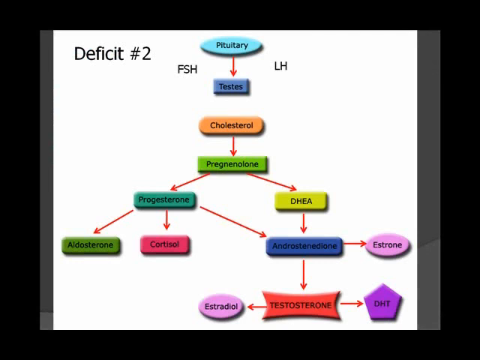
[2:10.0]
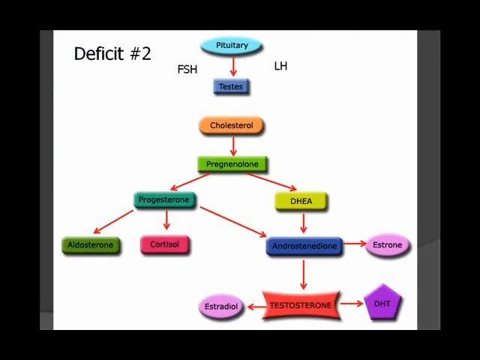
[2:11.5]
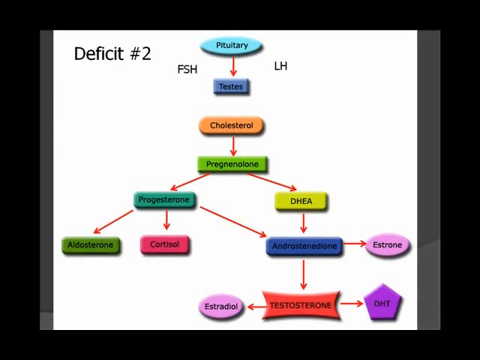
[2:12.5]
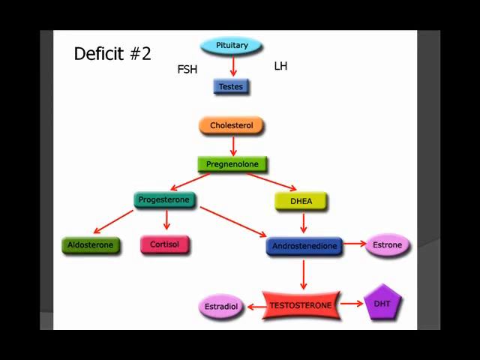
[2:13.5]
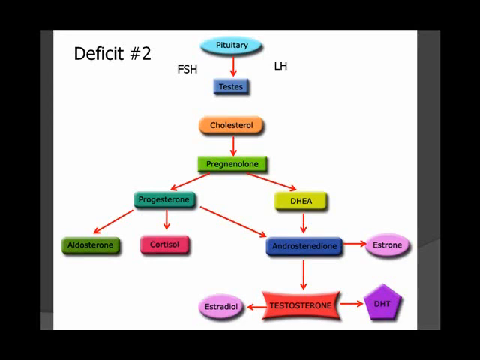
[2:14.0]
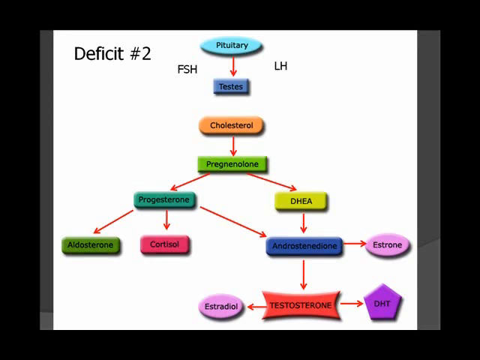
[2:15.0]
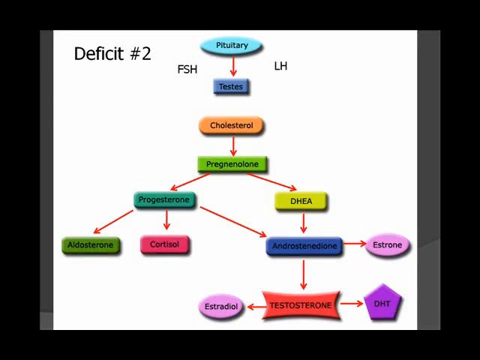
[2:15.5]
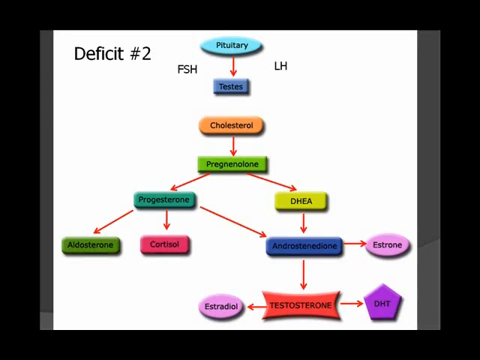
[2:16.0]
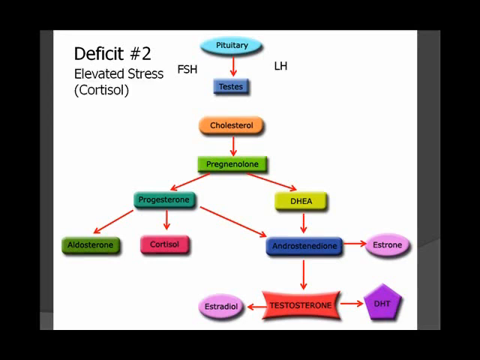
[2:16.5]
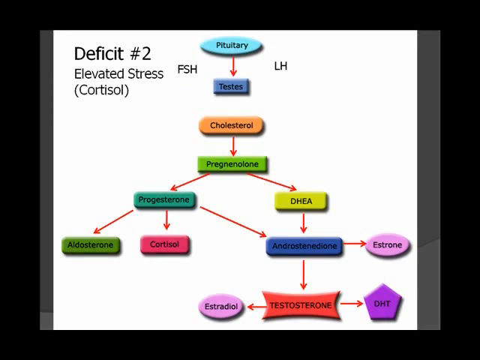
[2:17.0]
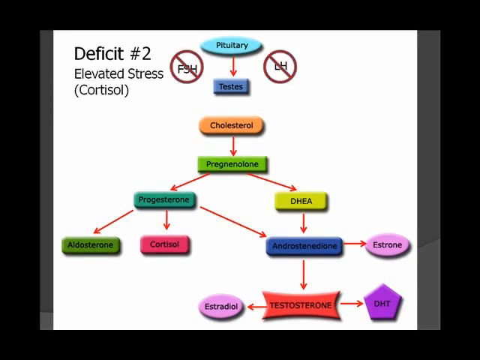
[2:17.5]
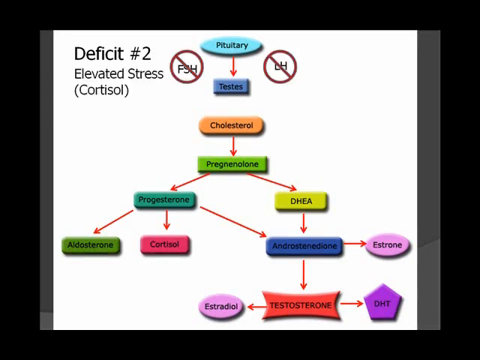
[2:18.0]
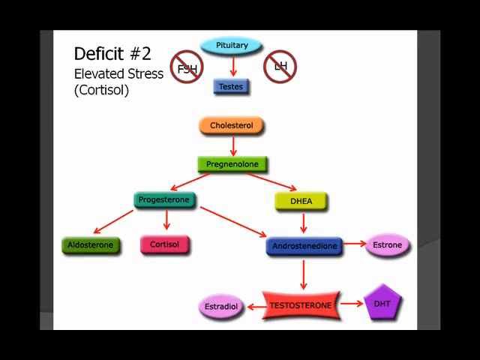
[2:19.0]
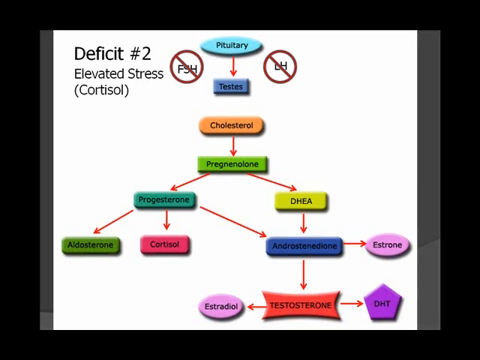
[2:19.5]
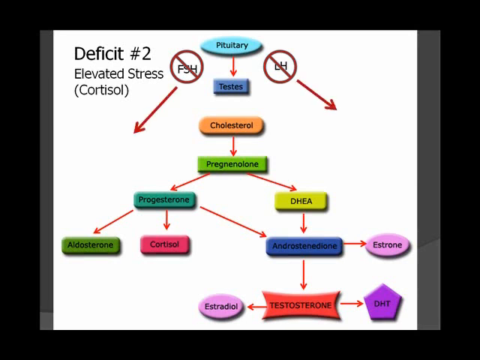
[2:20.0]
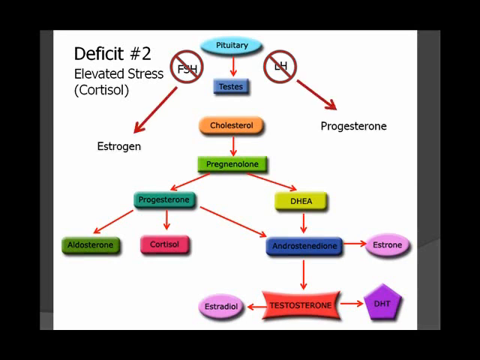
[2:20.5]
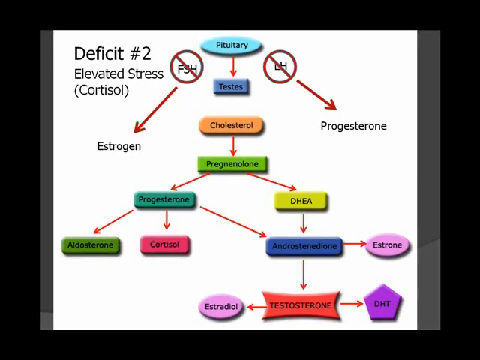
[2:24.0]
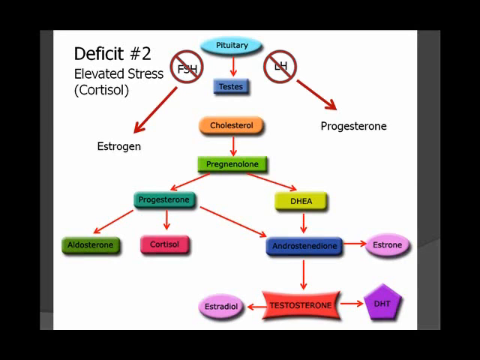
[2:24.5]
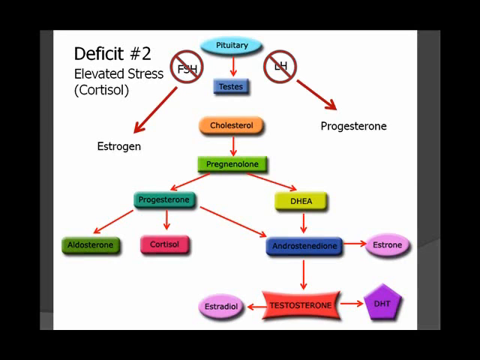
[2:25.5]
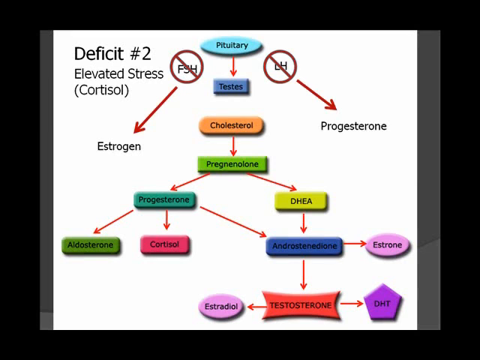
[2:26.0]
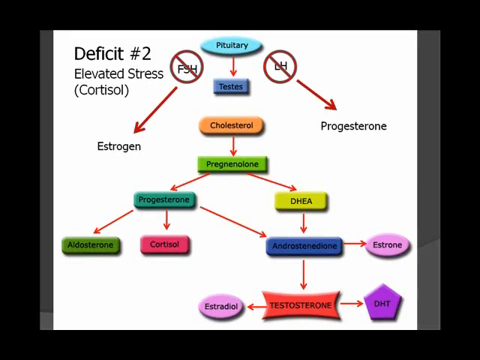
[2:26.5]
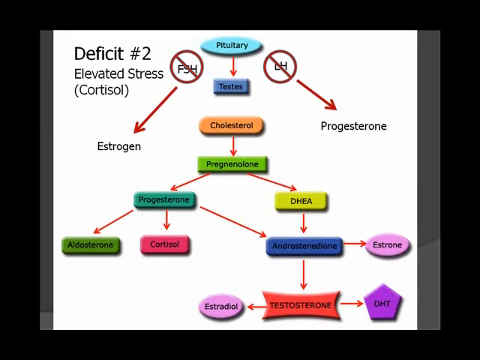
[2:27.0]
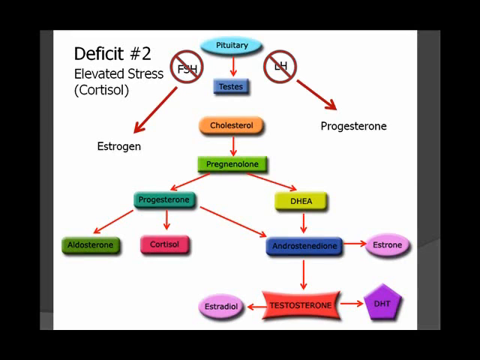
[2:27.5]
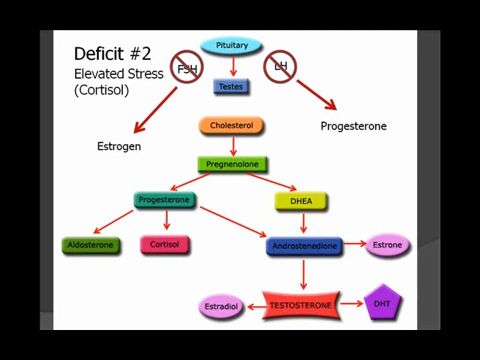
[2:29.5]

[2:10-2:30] Inside the black outer frame is a new slide that is not perfectly centered, skewed toward the left side of the available space. The slide has a white background with symbols arranged as a flowchart. At the top, in a blue oval, is the word "pituitary", with an arrow pointing down to a purplish-blue rectangular box with the word "testis". Below that, in an orange pill shape, is the word "cholesterol", with an arrow pointing down to a light green rectangular box with the word "pregnalone". Under "pregnalone", arrows point left and right: the left one to a light green rectangle with the word "progesterone", and the right one to a smaller light yellow rectangular box with the letters "DHEA".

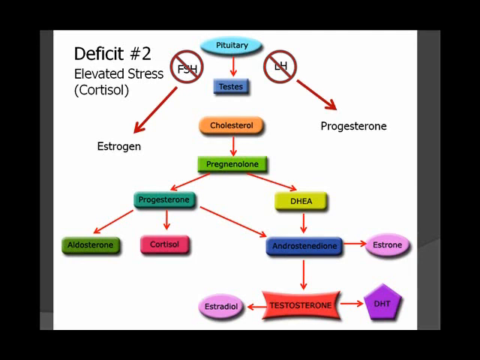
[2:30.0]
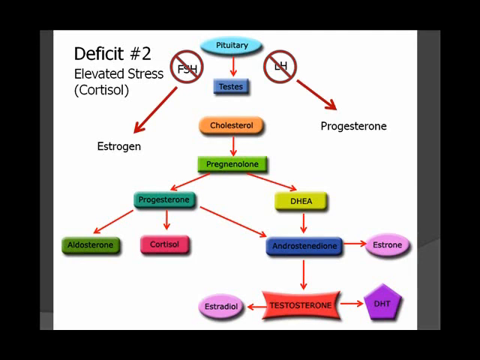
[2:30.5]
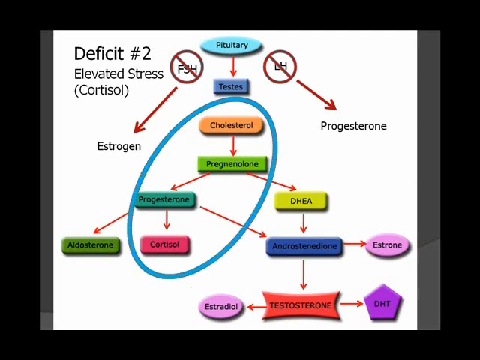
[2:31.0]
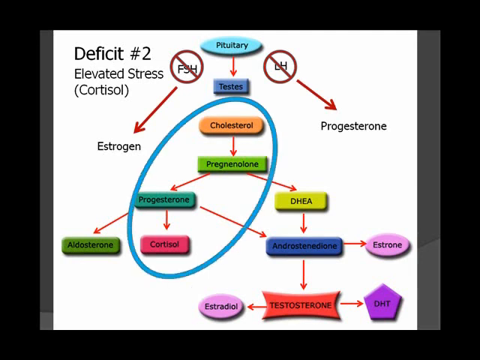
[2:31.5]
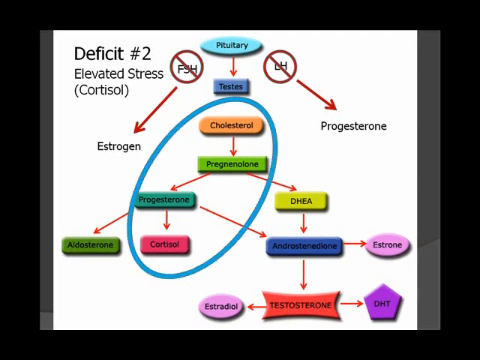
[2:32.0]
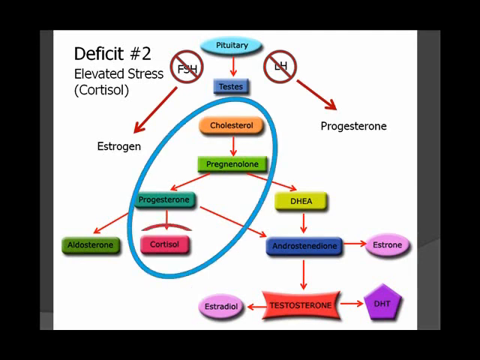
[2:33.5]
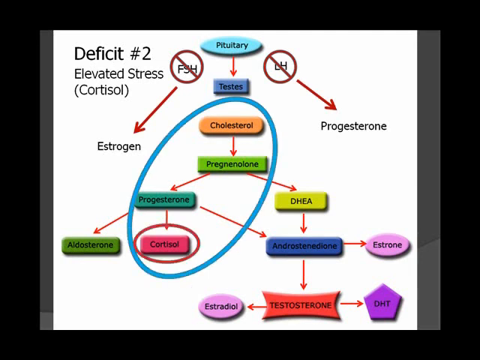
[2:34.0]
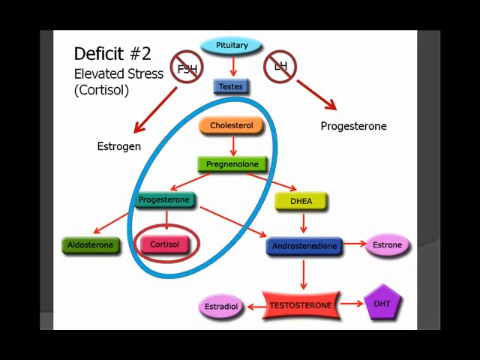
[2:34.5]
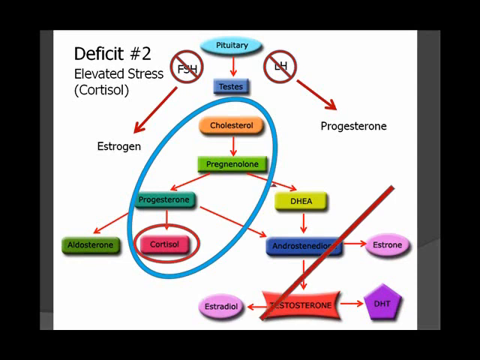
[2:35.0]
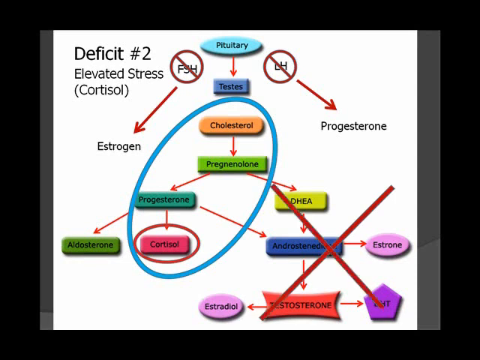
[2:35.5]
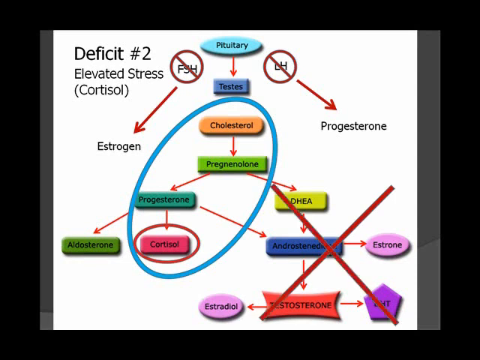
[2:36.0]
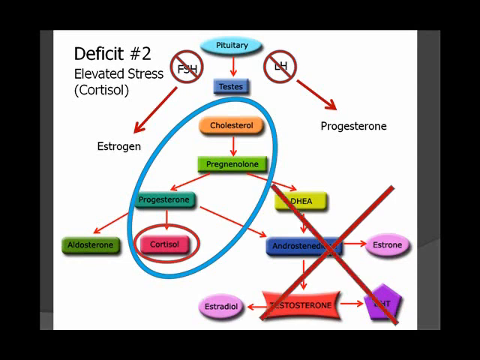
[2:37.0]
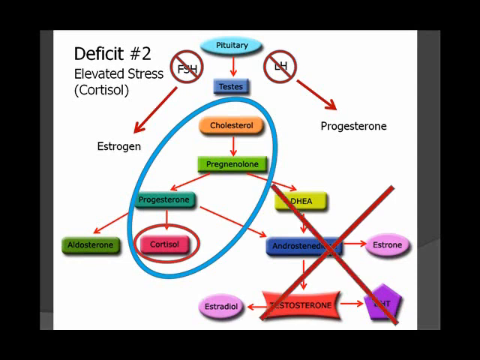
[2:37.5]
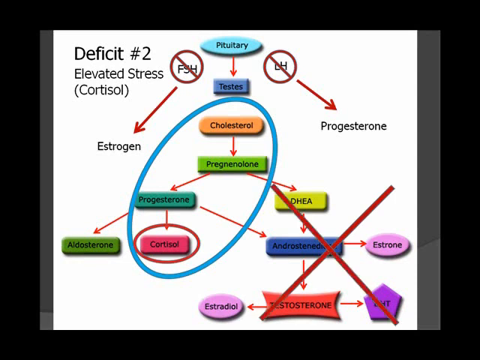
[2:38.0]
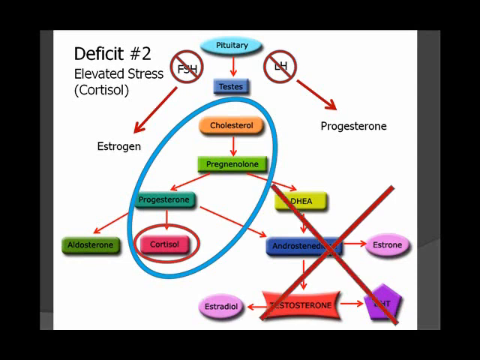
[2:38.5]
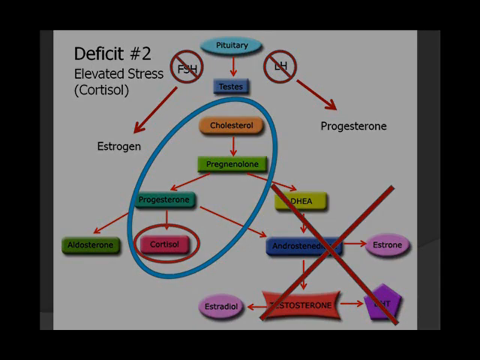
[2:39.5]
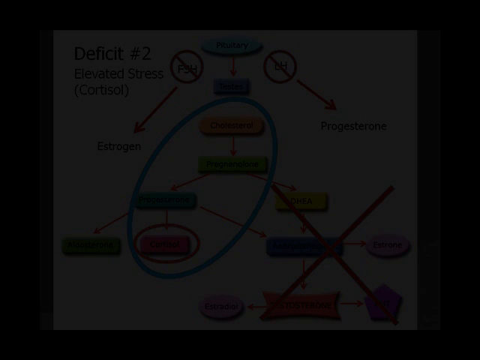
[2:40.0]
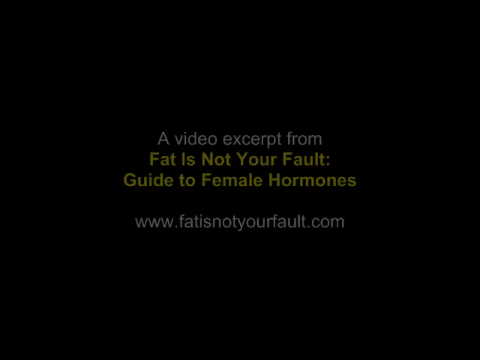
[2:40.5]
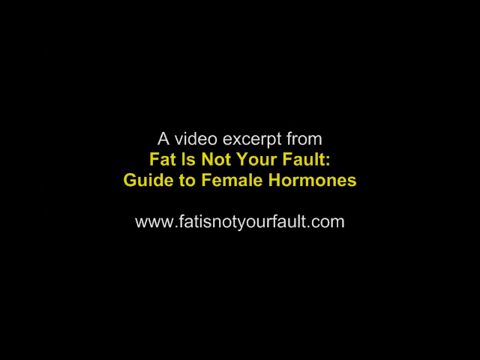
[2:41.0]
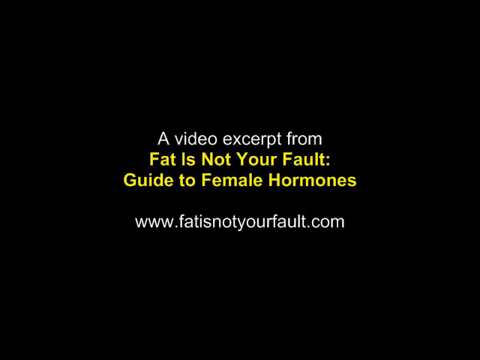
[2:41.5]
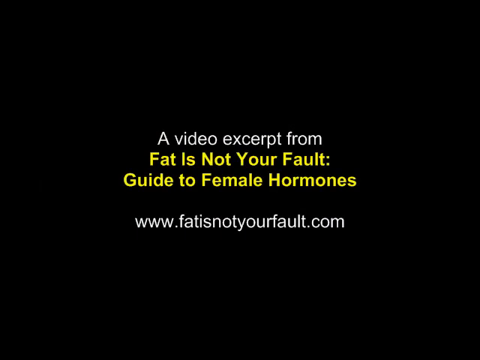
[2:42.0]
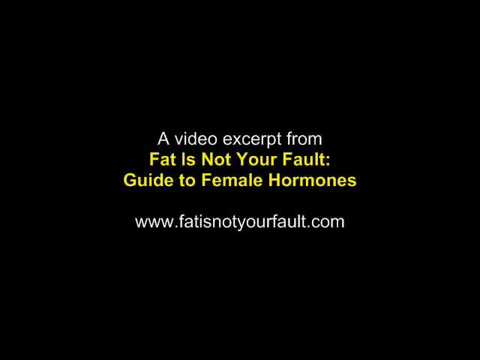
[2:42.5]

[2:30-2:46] An earlier slide is repeated with some changes. At the very top, in a blue oval, is the word "pituitary", with the letters "FSH" to its left and slightly below, and "LH" to its right and slightly below. These letters are now each circled in red with a red diagonal line through them, marking them as blanked out. An arrow points from the LH symbol down to the word "progesterone", and the crossed-out FSH letters have an arrow pointing down to the word "estrogen" on the left. The slide has a title in the upper left-hand corner in larger capitalized black text, "deficit #2", beneath it in smaller black font the words "elevated stress", and beneath that, in parentheses, the word "cortisol".